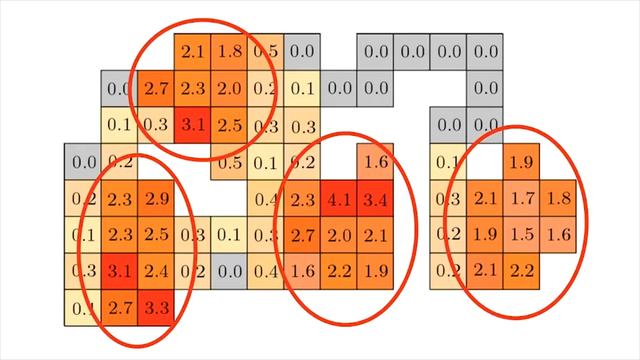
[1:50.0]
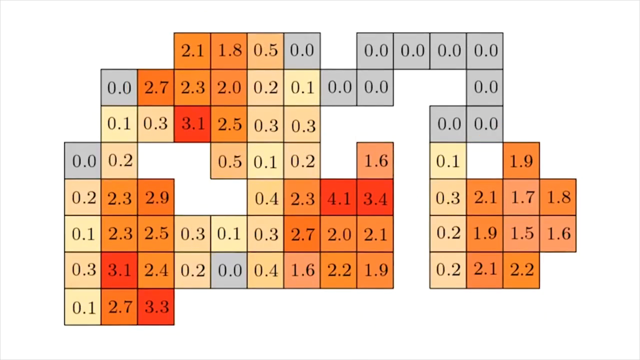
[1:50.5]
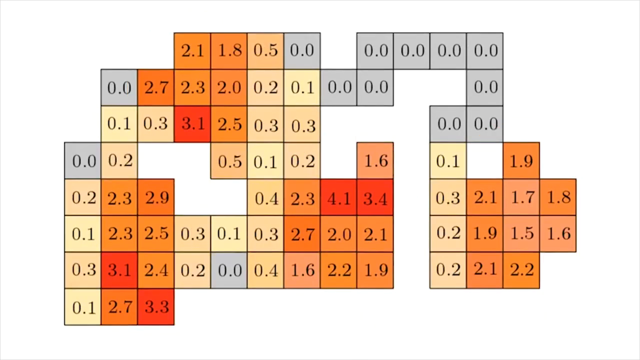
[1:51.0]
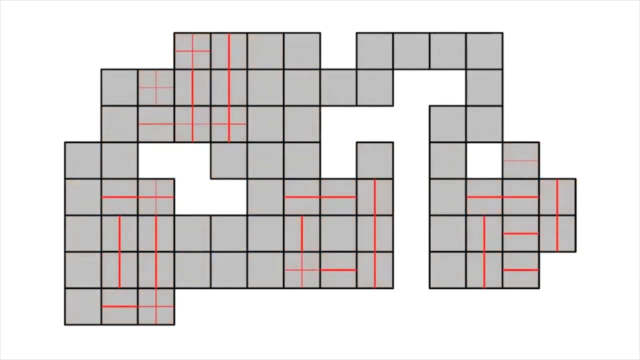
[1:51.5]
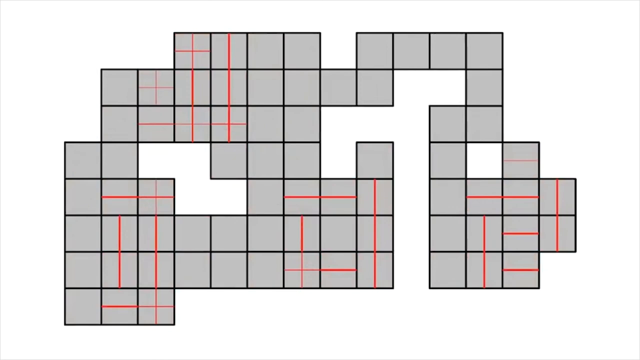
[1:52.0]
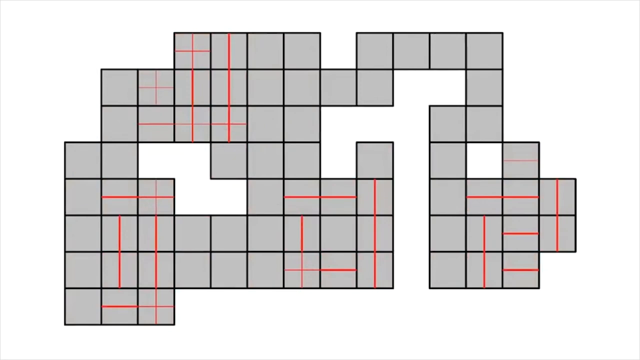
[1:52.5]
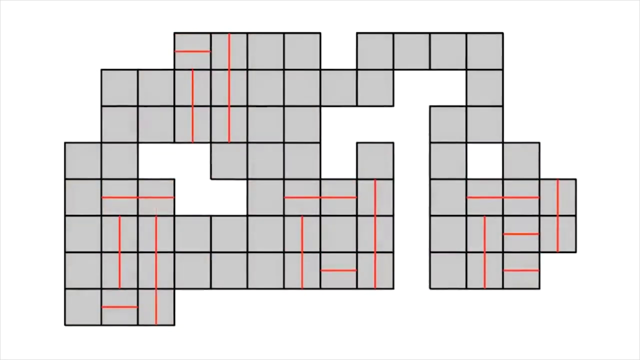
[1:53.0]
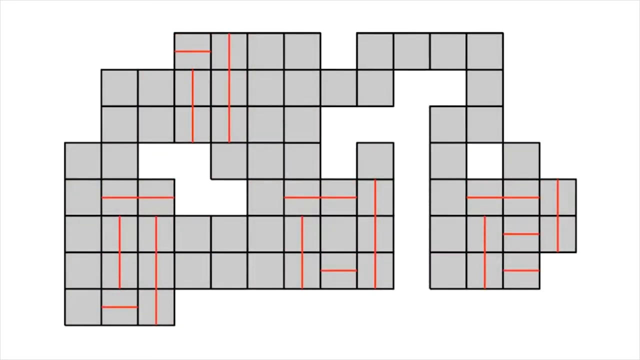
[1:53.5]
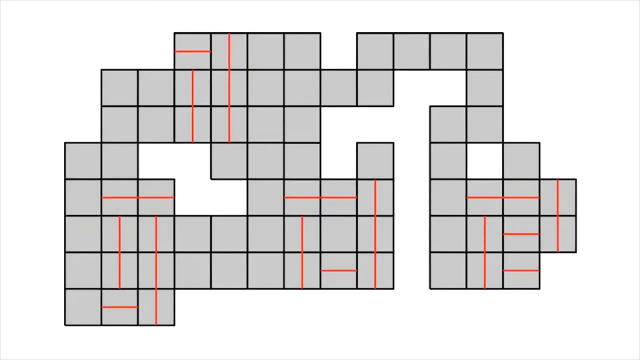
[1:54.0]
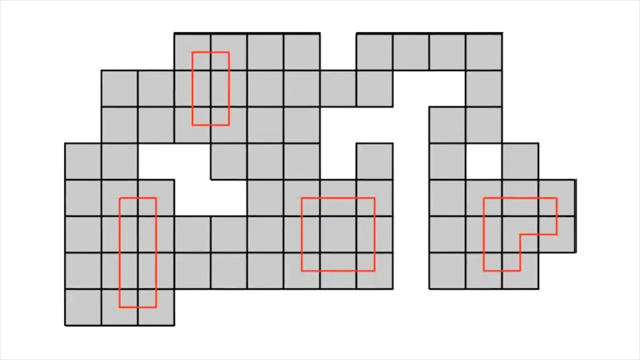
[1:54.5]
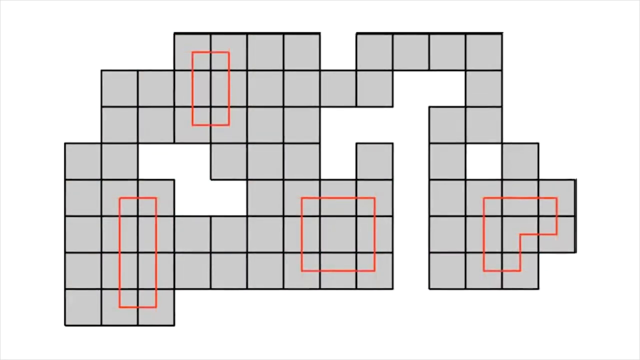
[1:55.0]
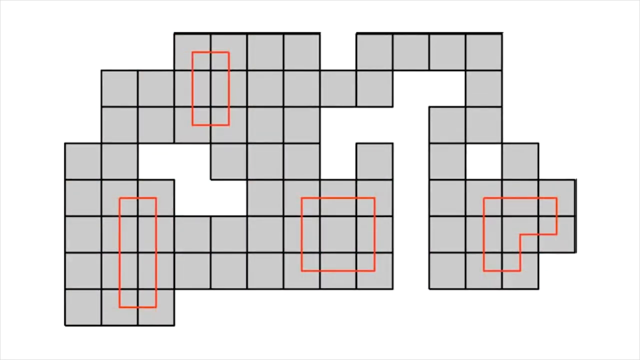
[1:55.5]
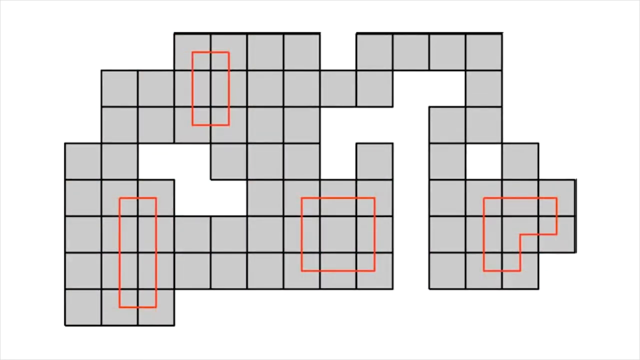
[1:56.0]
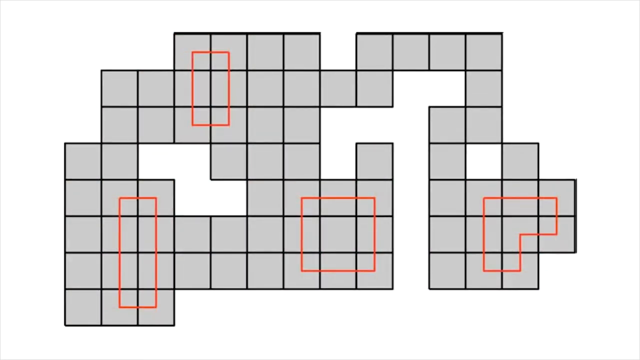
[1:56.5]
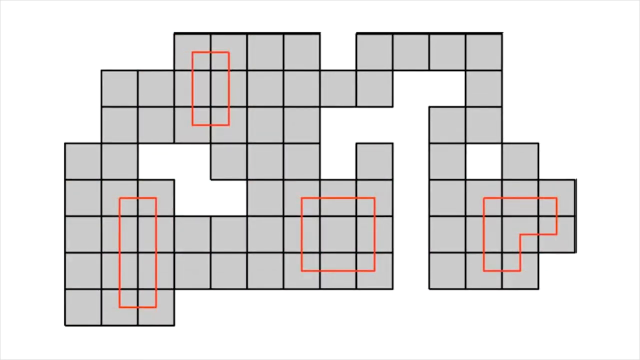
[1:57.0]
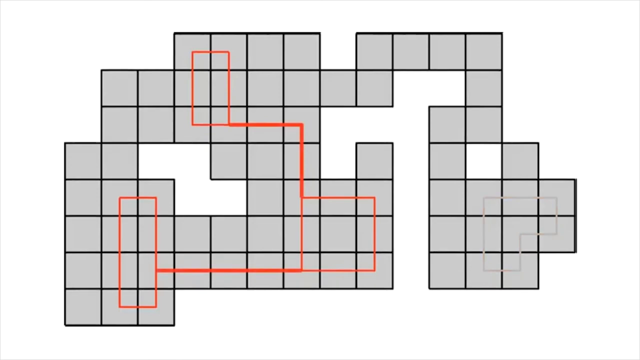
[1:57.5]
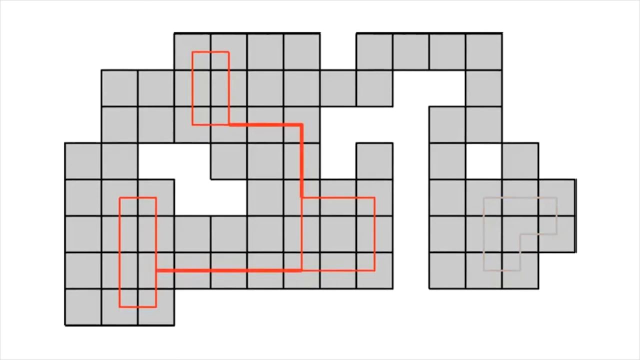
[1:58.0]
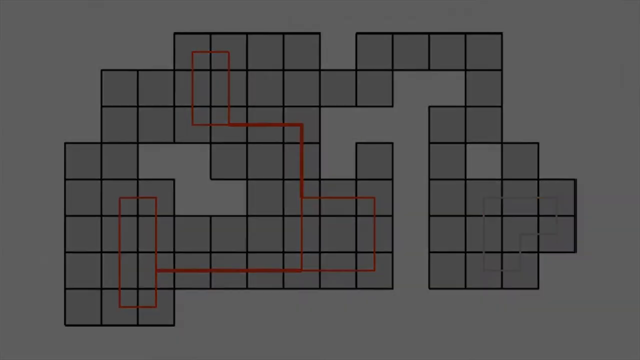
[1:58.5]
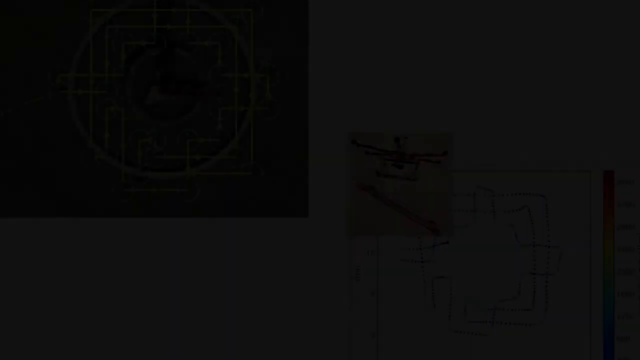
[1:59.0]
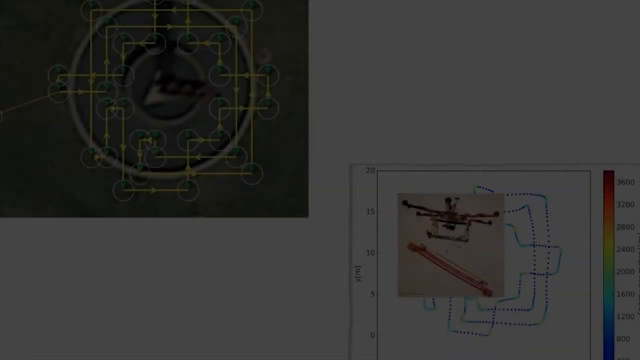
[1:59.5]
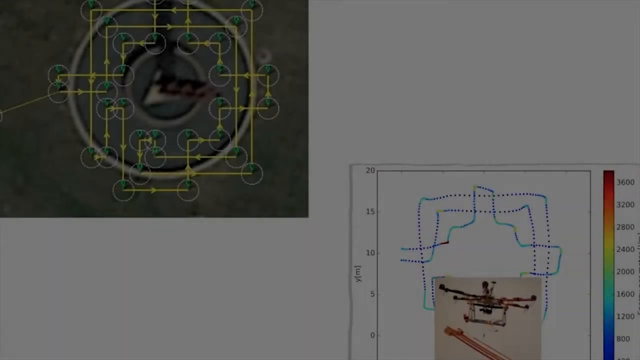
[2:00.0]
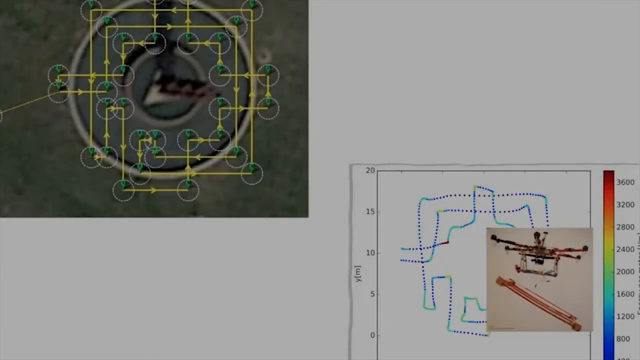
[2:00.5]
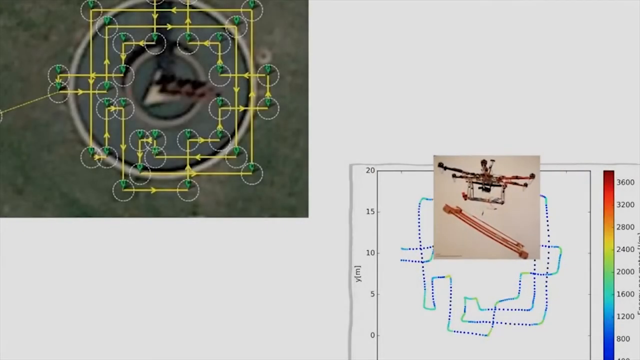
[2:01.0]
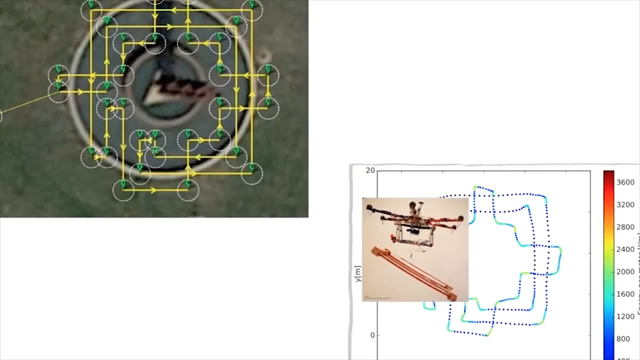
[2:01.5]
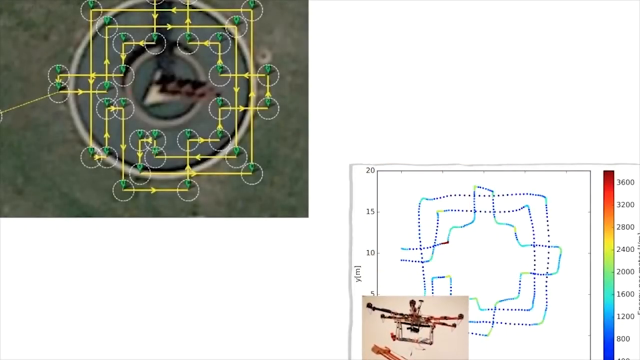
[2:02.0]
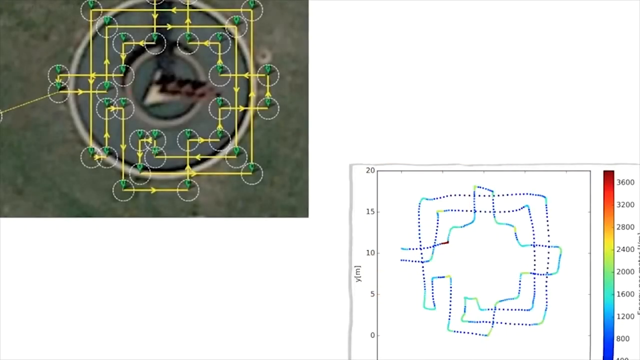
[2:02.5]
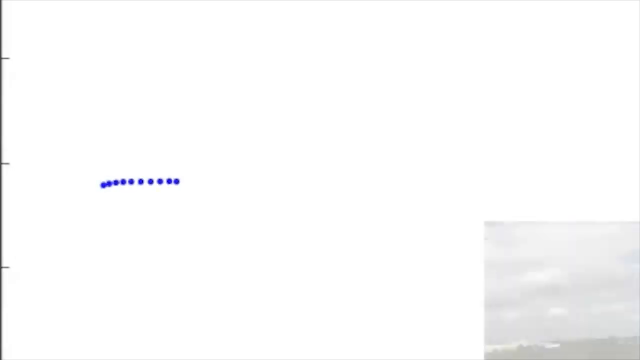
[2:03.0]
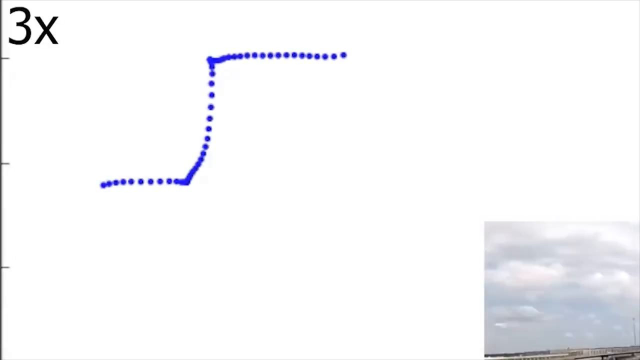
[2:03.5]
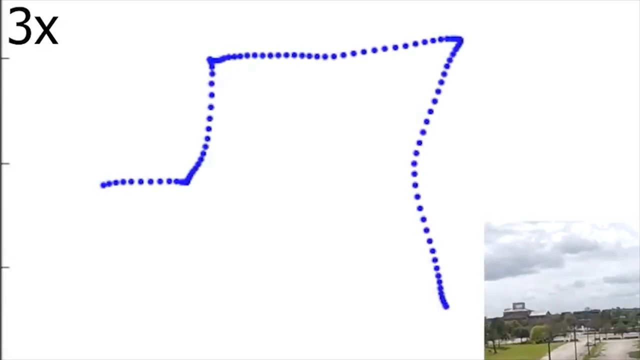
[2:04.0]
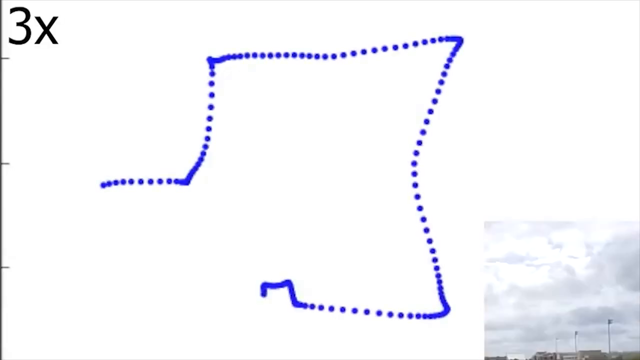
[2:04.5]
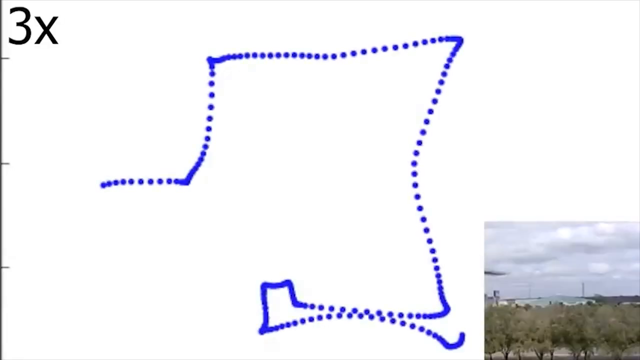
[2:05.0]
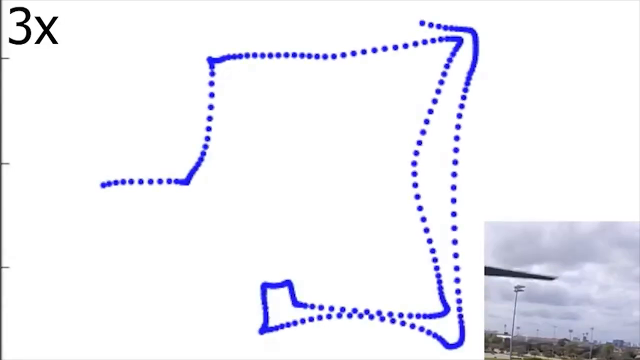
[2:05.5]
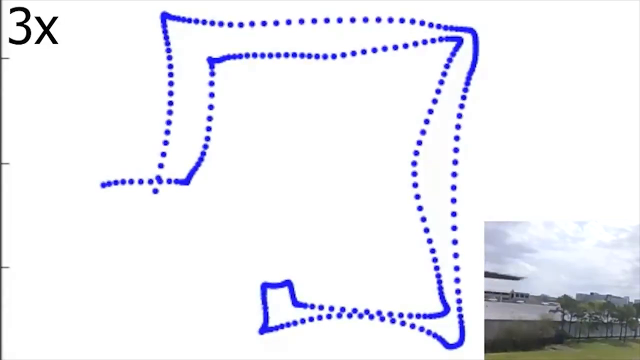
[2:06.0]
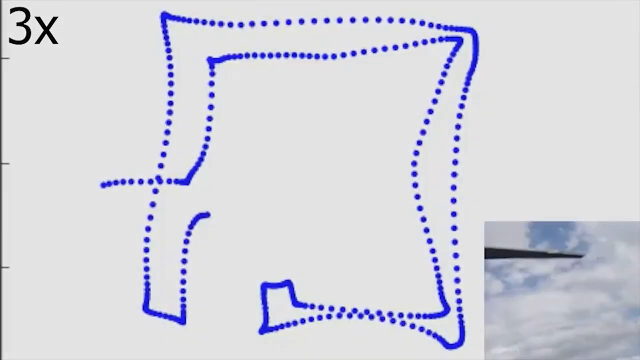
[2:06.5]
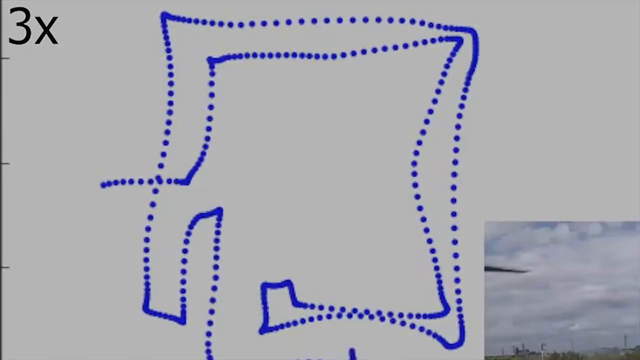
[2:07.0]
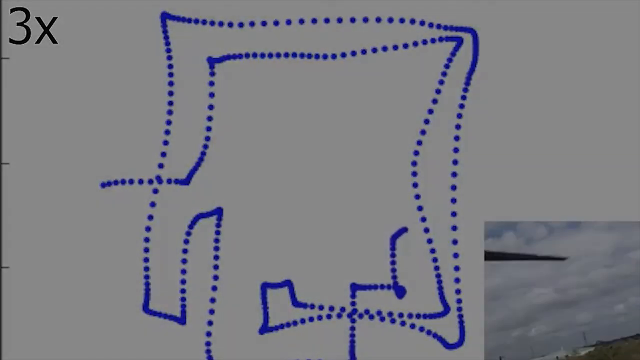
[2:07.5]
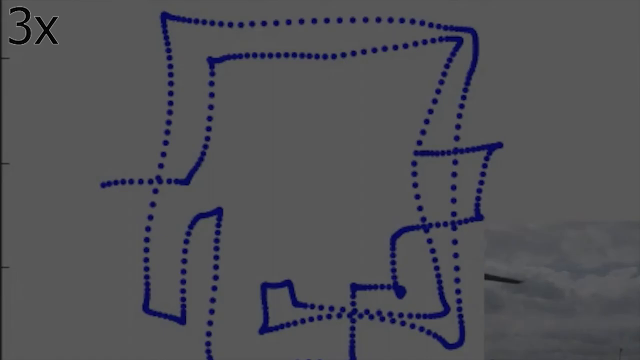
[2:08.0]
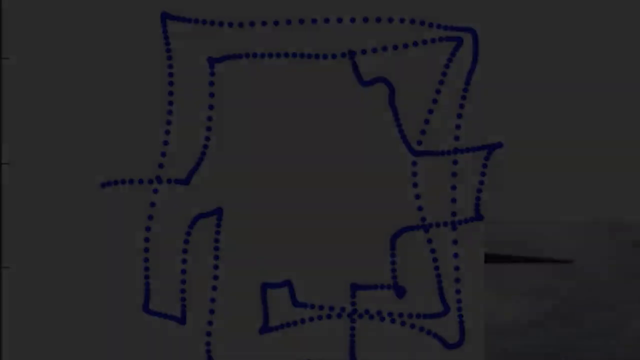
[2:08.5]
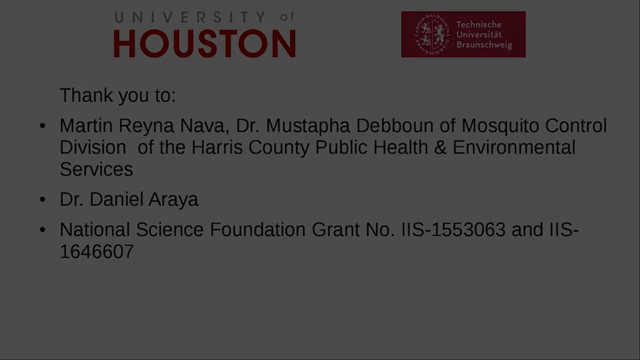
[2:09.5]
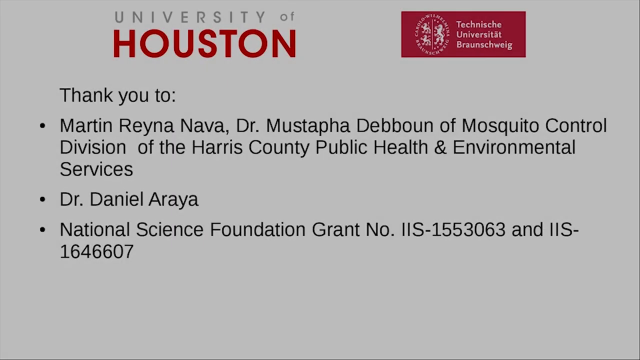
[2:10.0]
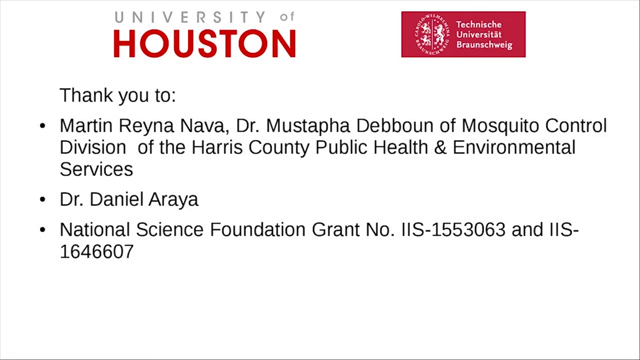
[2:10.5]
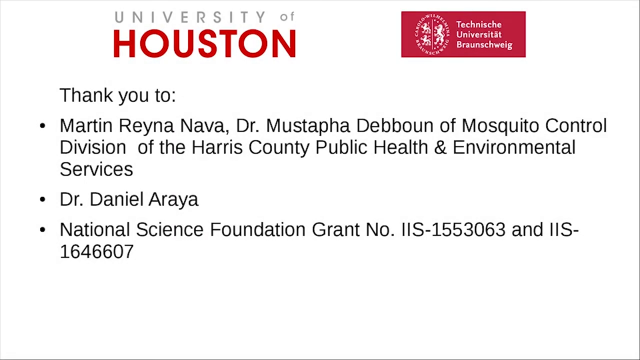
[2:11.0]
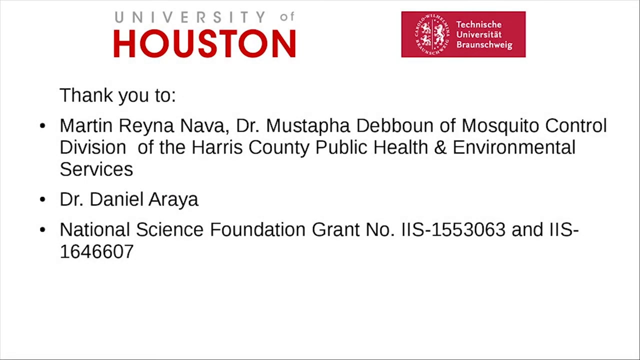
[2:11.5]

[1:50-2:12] Four circled areas with colored boxes are shown. In the upper left area, colored boxes show 2.1, 1.8, 2.7, 2.3, and 3.1. The circled area underneath shows 2.3, a couple of 3.1s, 3.3, and 2.4. Another circled area on the right shows 2.3, 4.1, and 3.4, and the last one shows a couple of areas with 1.9 and 2.1. These disappear and are replaced by red lines forming closed shapes: two are rectangular, one is a square, and one is an uneven shape resembling a corner desk, with lines connecting them. The screen goes black, there is a flicker, and another graph appears with "3x" in the upper corner and blue dots and lines drawn on it. Finally, "University of Houston" appears on what looks like a thank-you page.